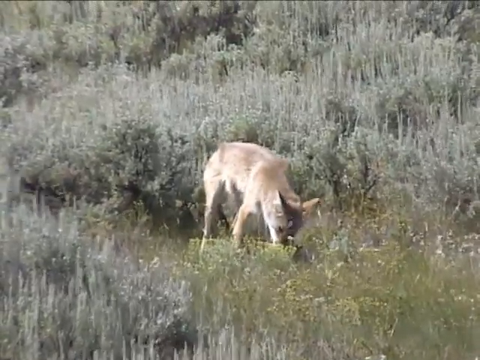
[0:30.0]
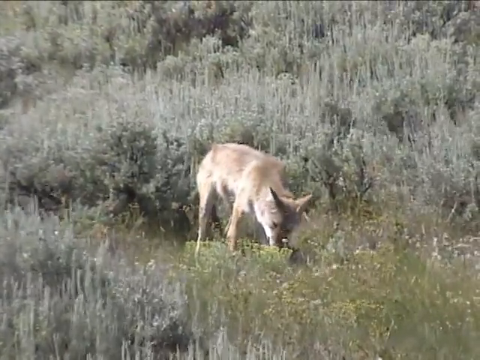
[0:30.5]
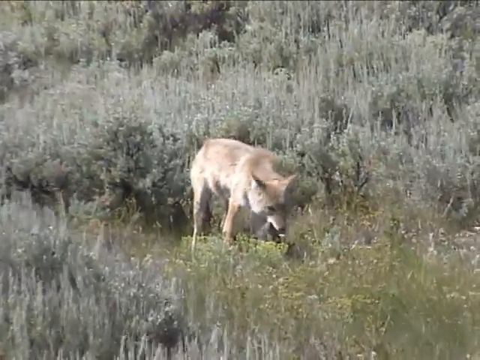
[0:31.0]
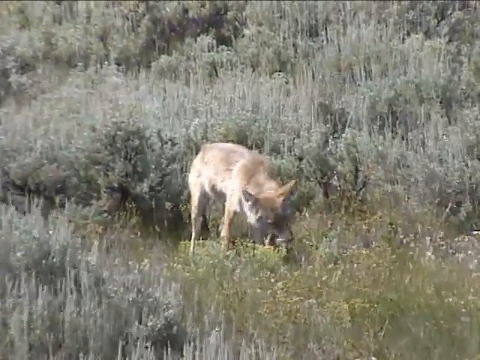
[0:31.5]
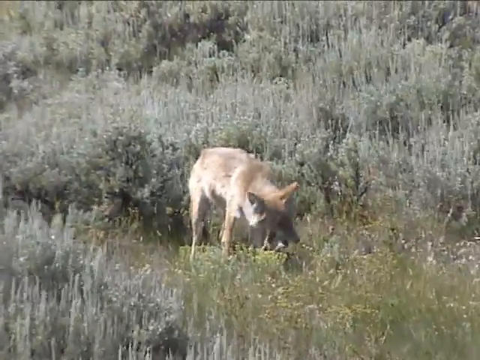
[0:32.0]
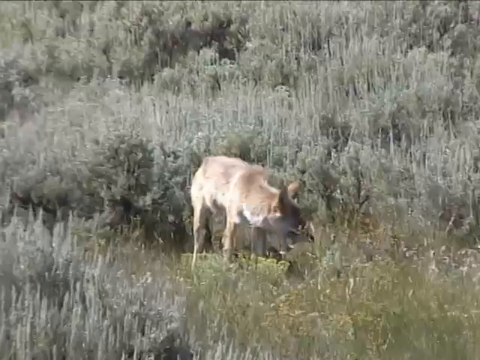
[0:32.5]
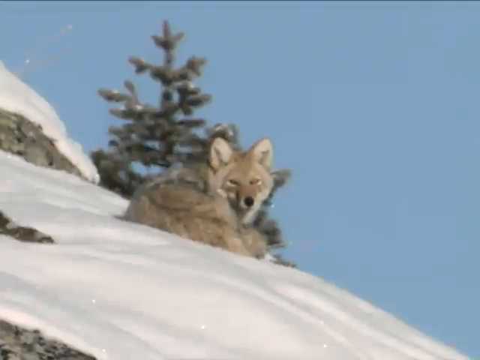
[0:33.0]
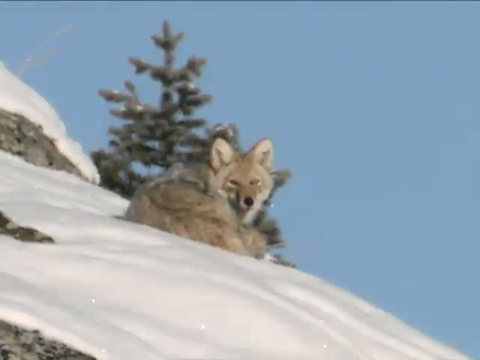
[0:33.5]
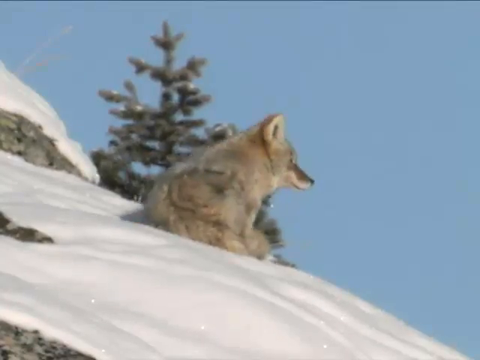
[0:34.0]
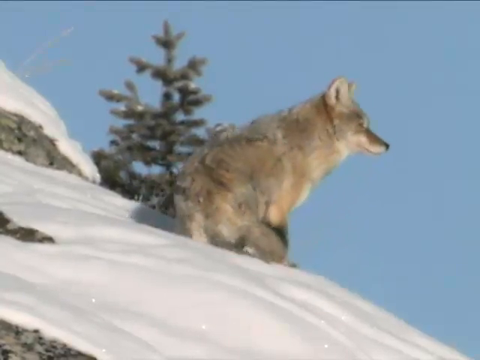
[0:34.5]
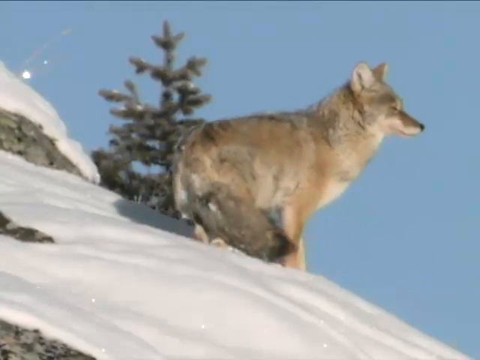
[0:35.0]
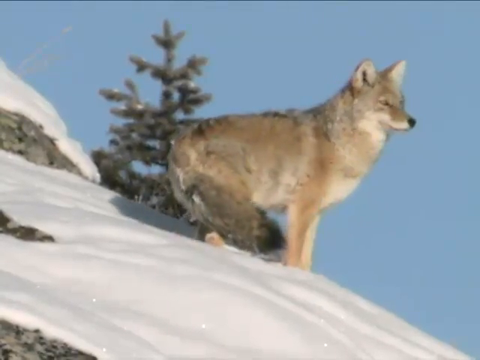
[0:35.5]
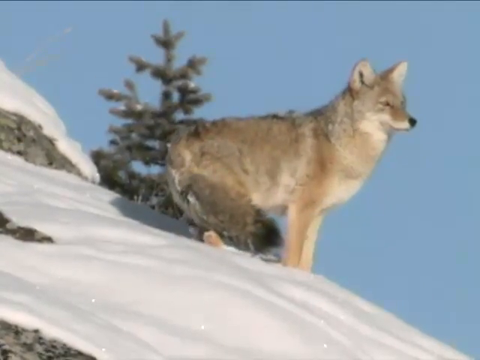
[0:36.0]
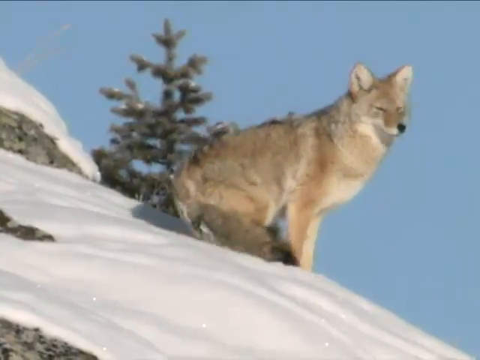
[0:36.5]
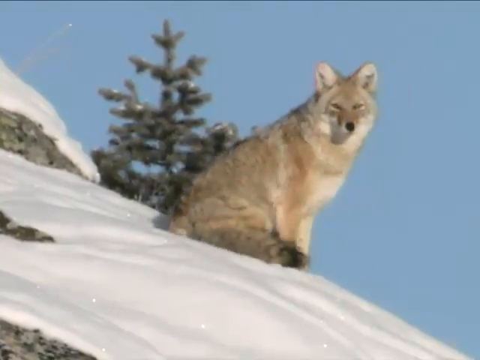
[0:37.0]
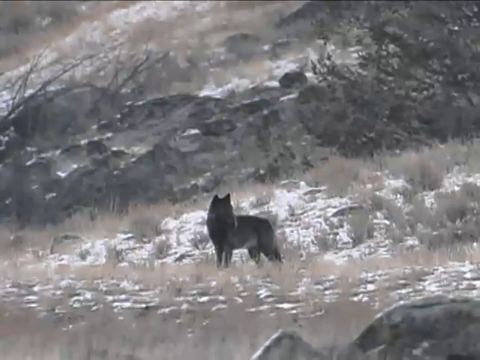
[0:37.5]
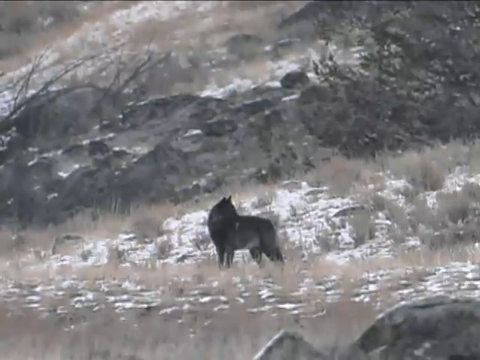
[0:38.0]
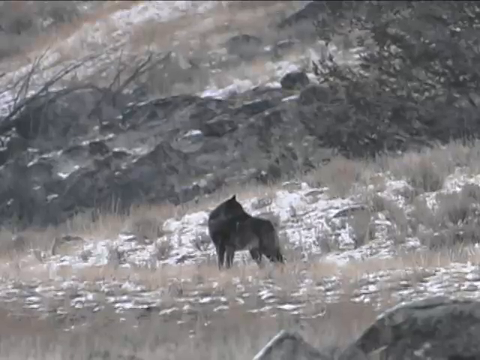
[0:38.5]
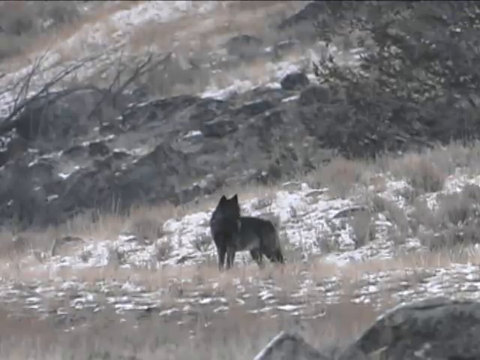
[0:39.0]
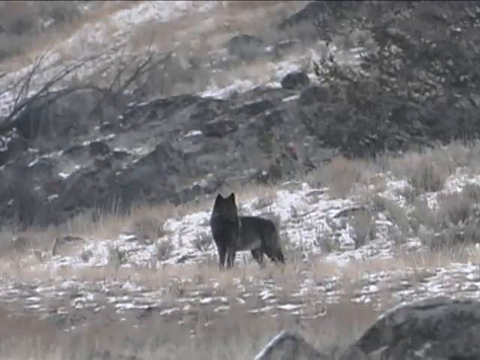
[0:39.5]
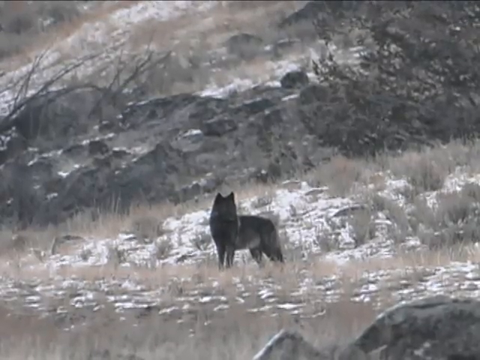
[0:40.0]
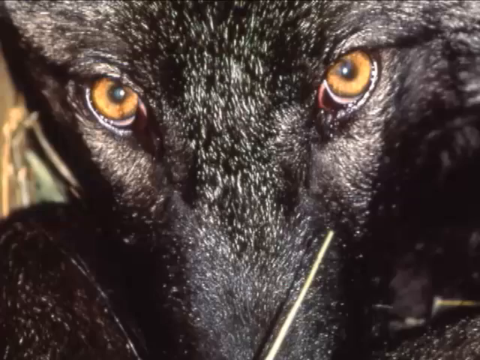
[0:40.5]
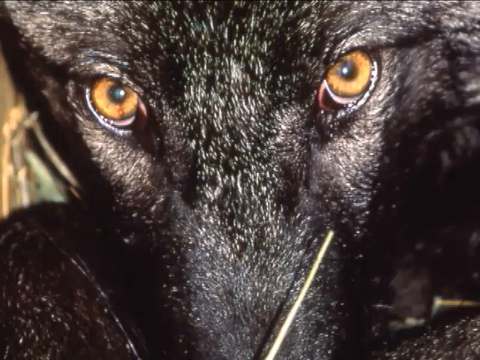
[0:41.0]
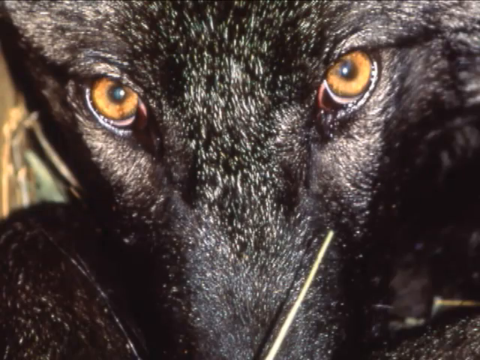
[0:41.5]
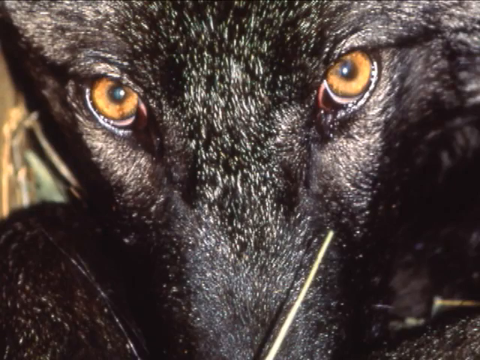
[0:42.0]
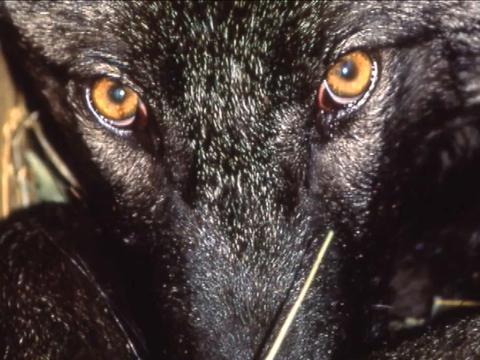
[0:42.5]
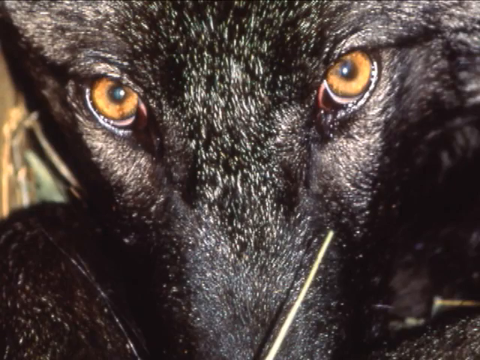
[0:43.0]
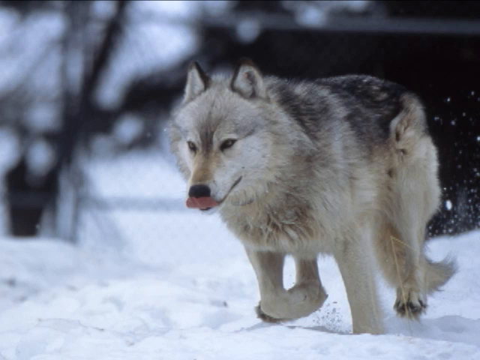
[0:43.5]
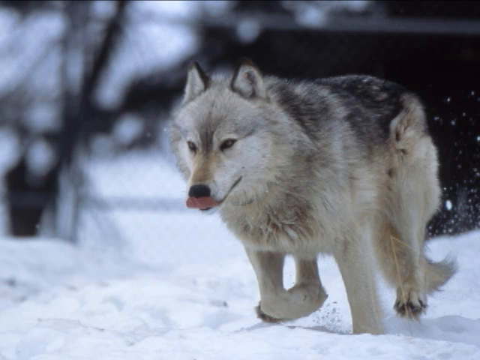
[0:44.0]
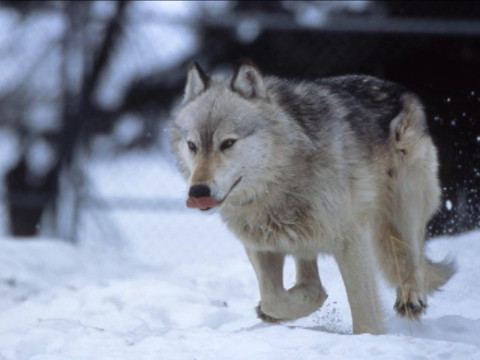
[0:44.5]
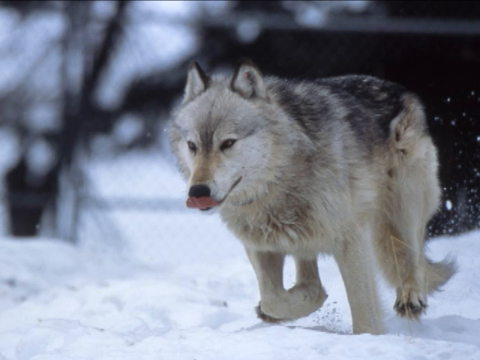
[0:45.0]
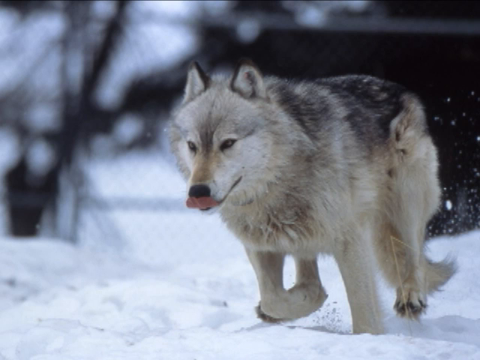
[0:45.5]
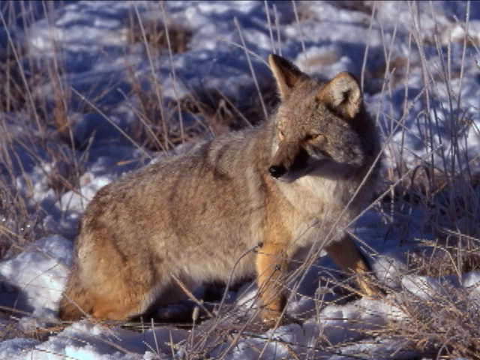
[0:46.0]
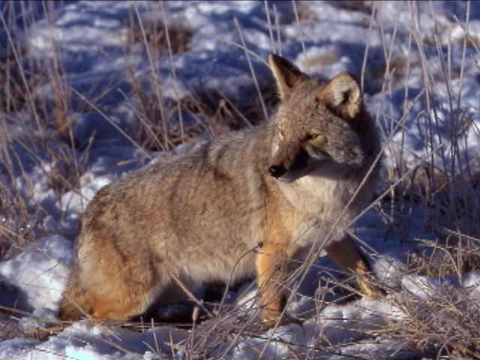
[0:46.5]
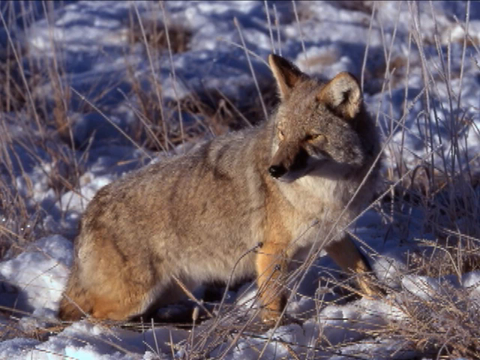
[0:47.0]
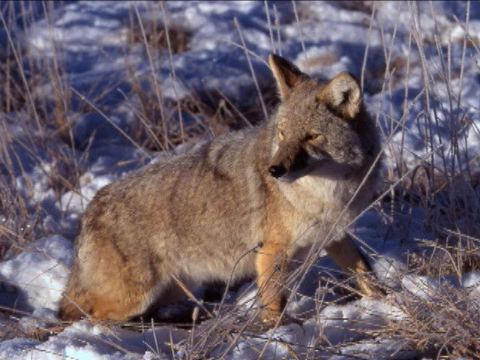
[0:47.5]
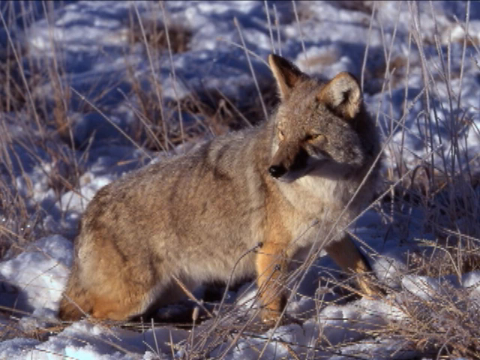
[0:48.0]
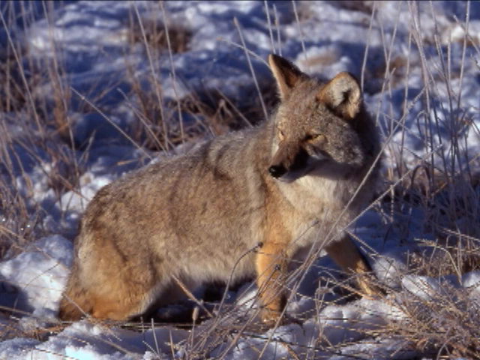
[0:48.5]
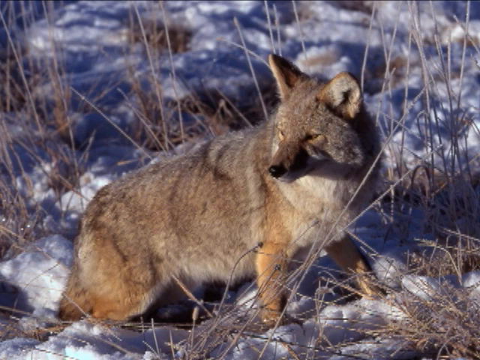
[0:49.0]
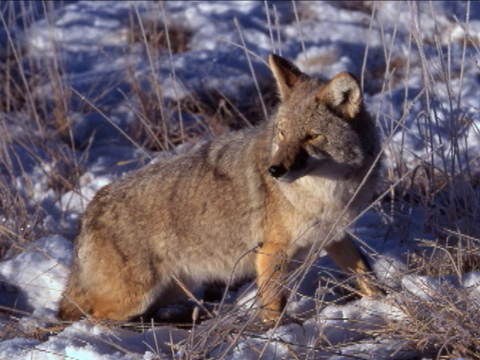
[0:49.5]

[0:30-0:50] A brown coyote eats a fresh meal in a green field, and the view switches to a coyote sitting on top of a snowy mountain. Next is a picture of a coyote in an empty field; it seems to have brown, longer fur and is standing with its head toward the left side of the screen. A close-up follows of what looks like a canine face with all-black fur and two yellow eyes, replaced by a canine of some sort, a coyote or a wolf, running through a snowy scene. That is replaced by a picture of a coyote standing in a snowy scene with tall dried grass all around him. All of these images seem to show coyotes in their natural habitat.